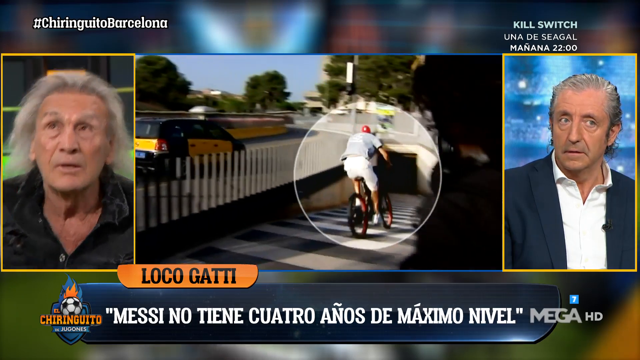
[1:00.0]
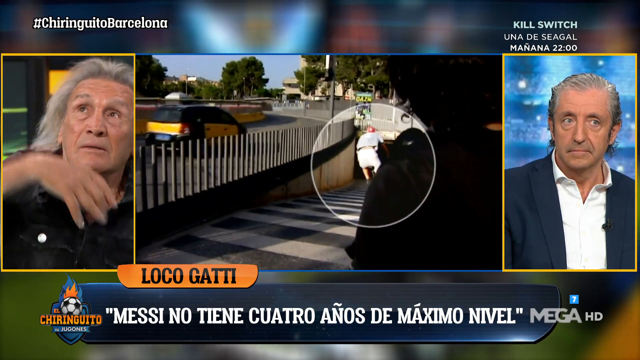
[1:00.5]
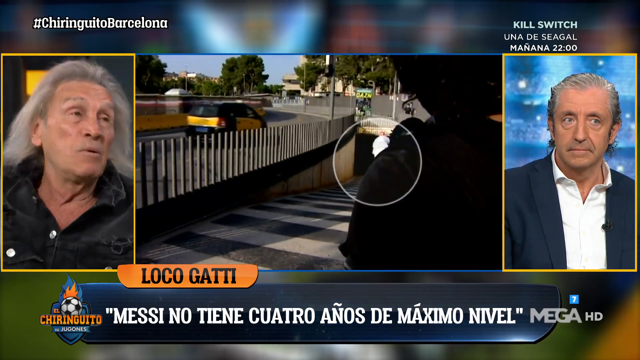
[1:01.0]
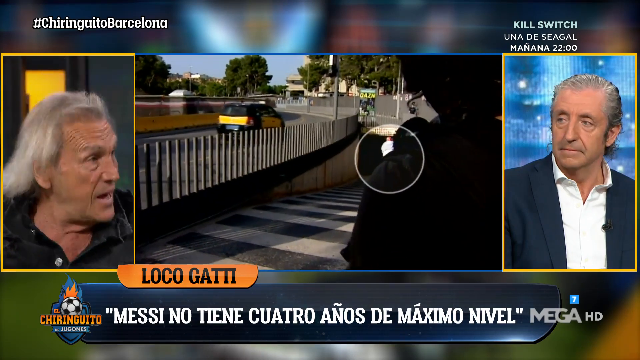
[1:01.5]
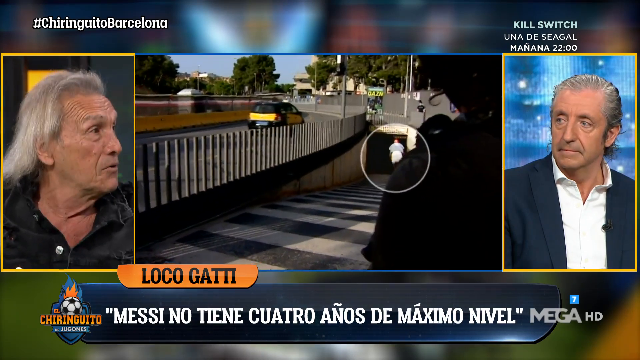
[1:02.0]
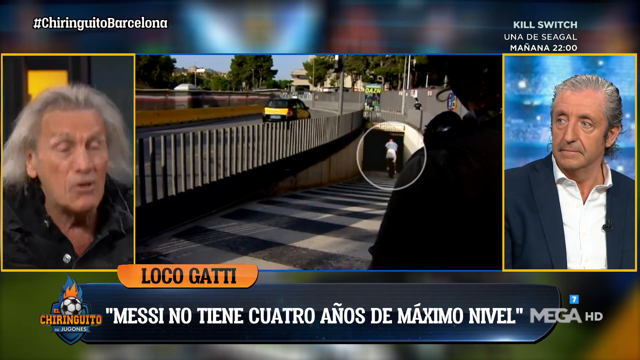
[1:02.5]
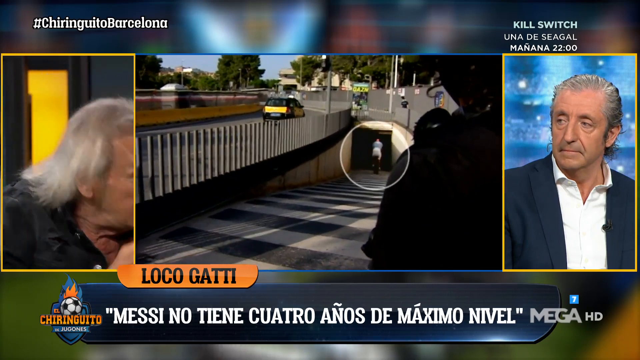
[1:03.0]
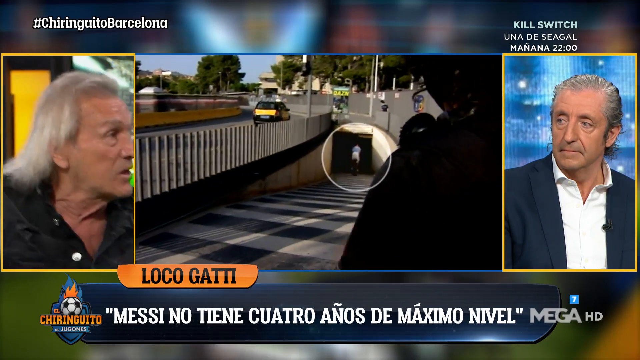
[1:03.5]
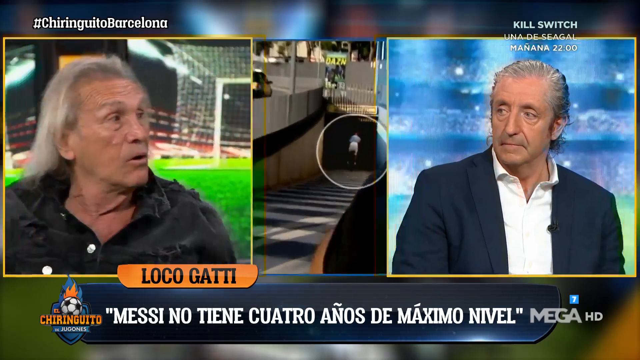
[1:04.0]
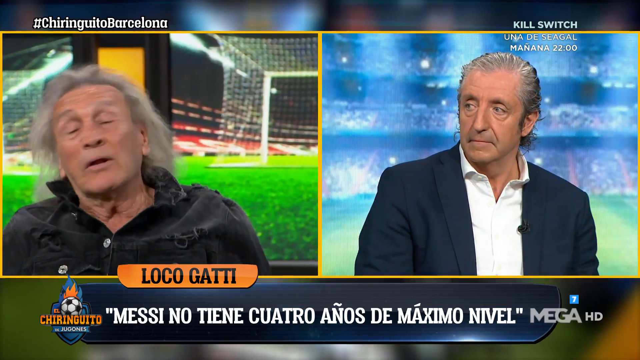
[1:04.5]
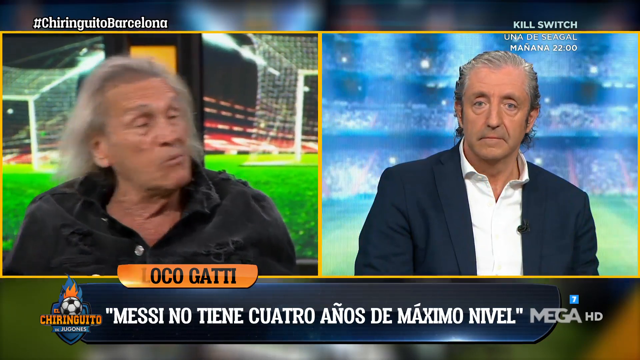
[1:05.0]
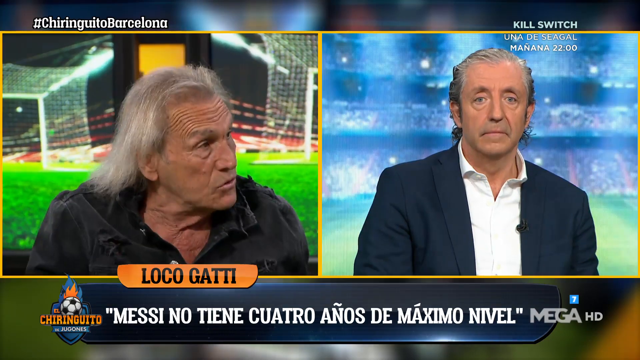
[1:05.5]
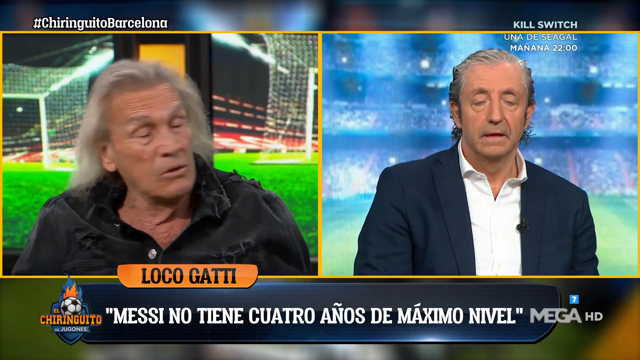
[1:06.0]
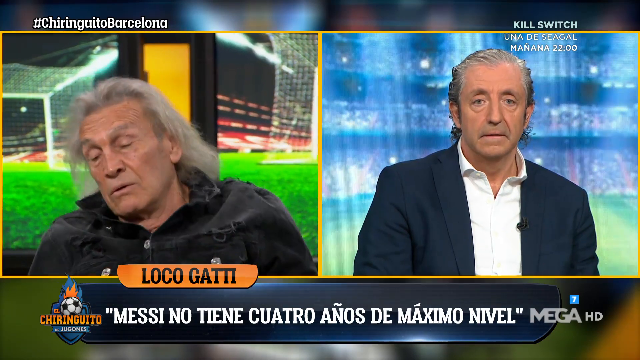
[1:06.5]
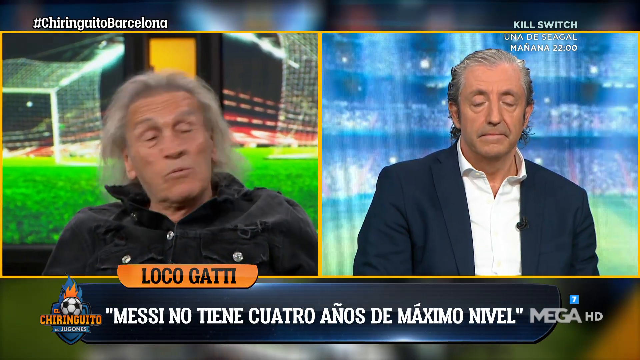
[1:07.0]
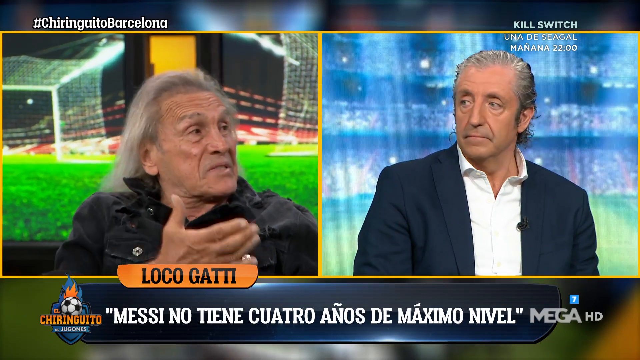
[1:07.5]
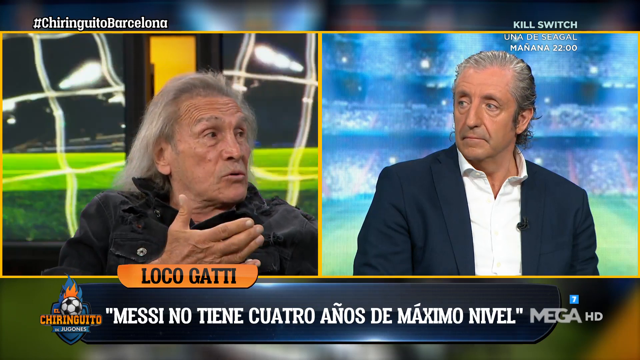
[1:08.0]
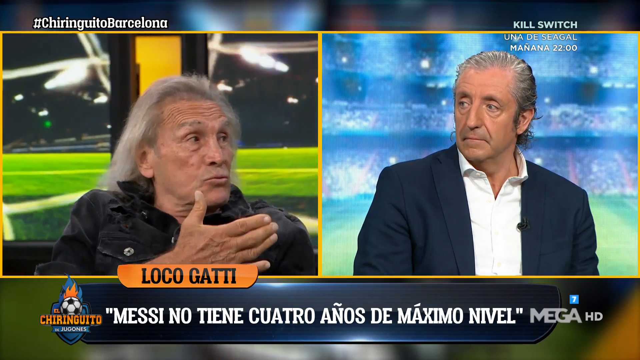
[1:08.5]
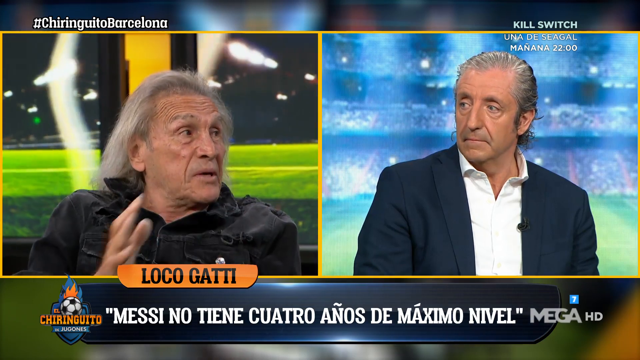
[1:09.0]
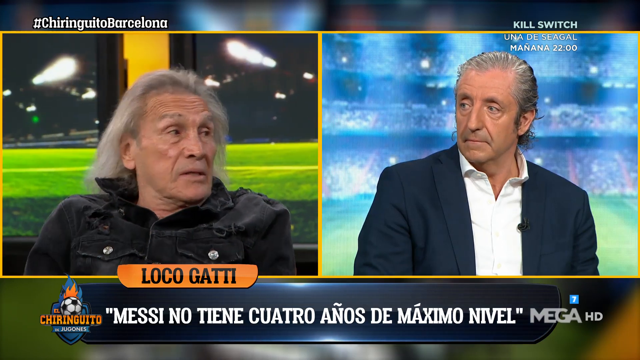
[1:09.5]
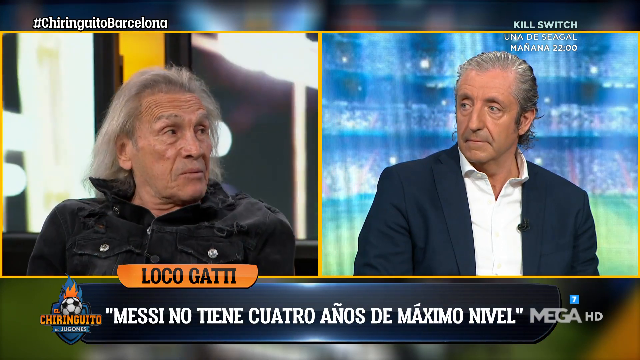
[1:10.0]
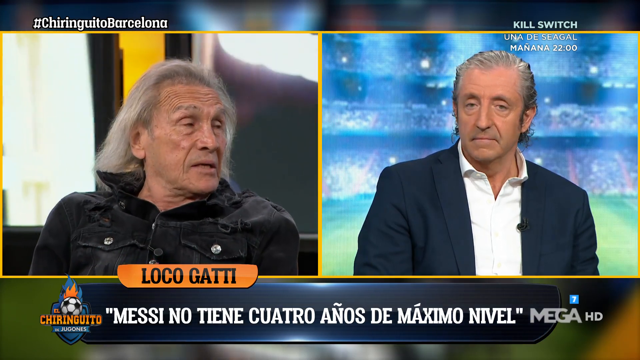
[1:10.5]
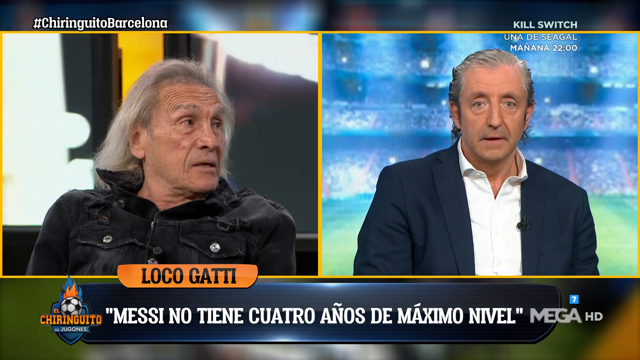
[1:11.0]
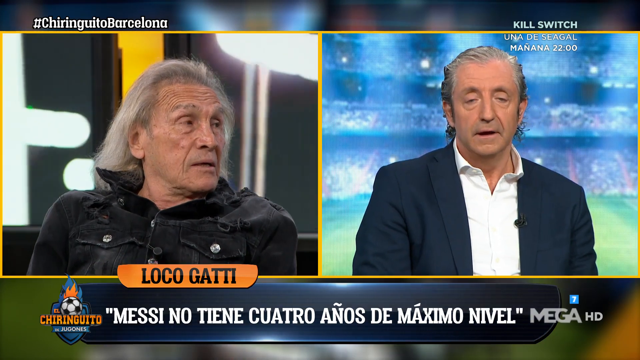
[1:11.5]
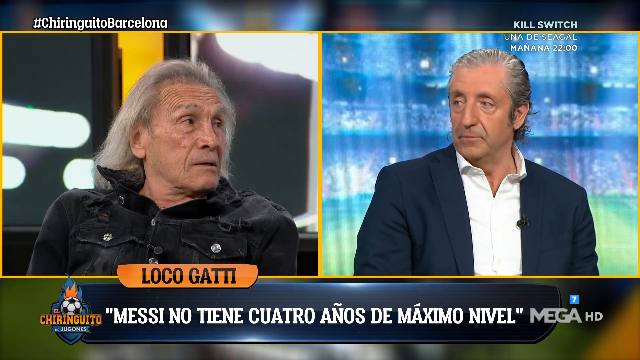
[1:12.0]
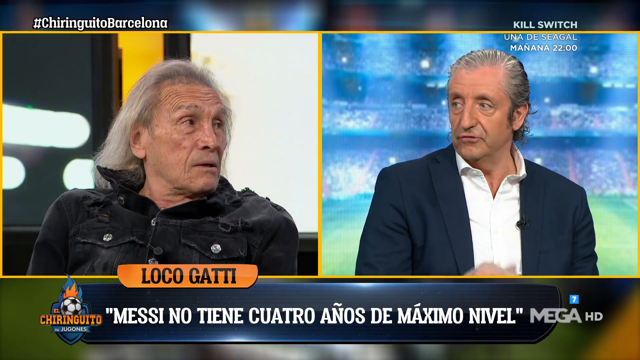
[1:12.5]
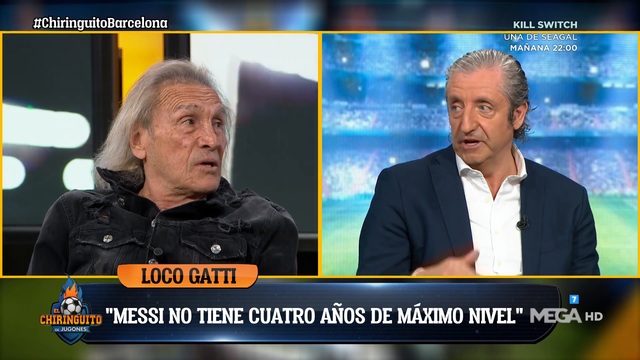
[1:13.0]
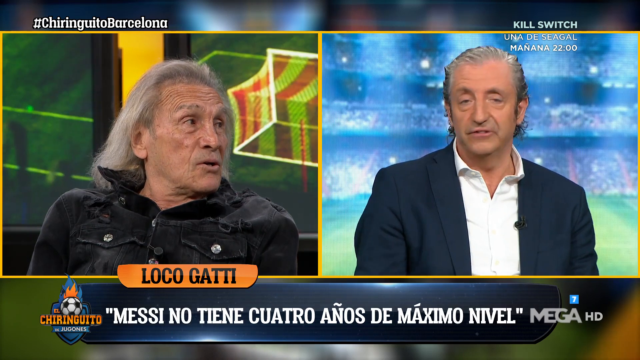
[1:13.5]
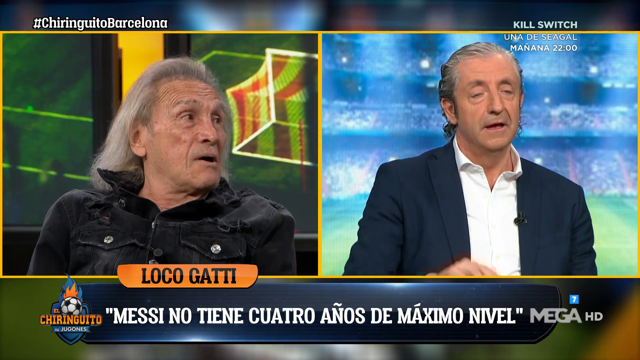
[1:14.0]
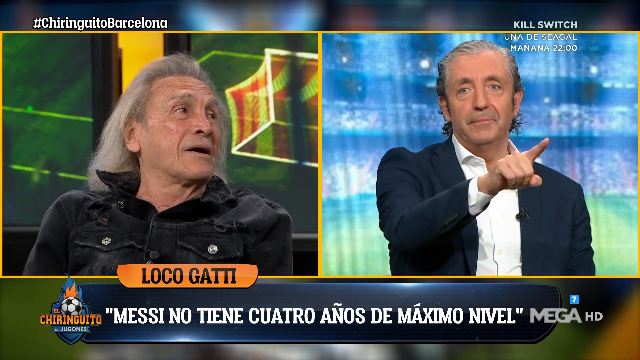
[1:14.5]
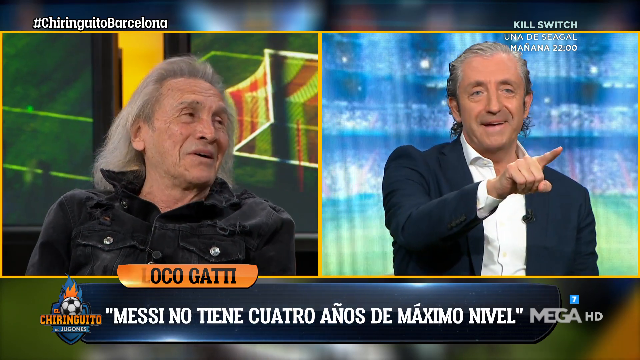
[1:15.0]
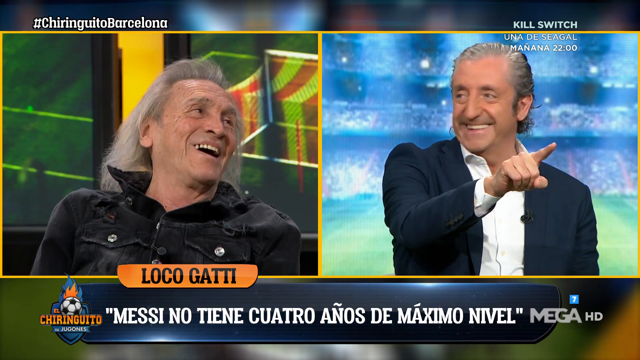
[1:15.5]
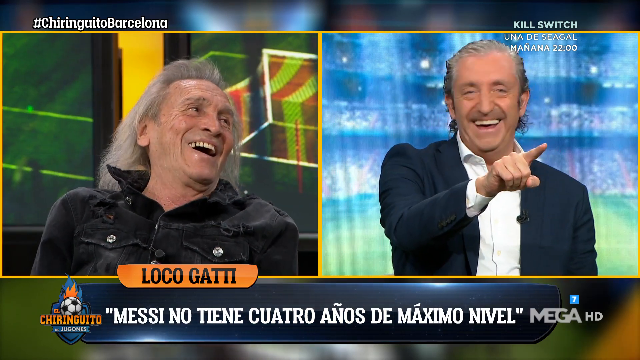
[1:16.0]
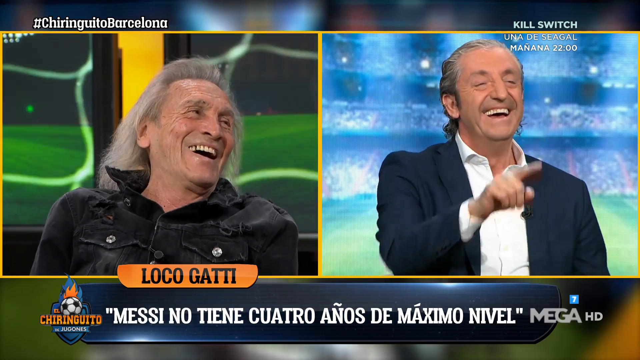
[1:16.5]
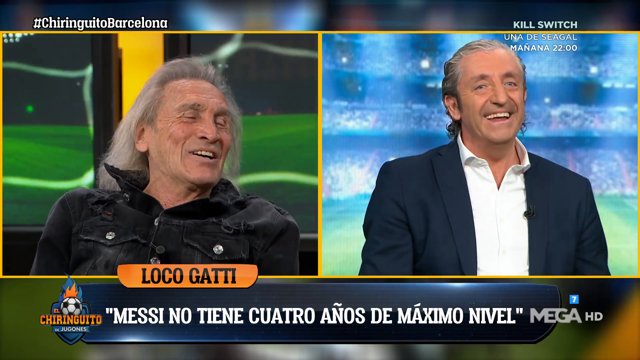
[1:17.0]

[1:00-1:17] In this news show, the center of the screen first shows a bicycle rider riding down a pedestrian ramp that leads down into a tunnel; when he reaches the entrance, he rides all the way into the tunnel. The two sides of the screen then meet in the middle, showing a man talking on the right and a man talking on the left. The man on the right points his finger out in front of him as he talks and laughs, looking out into what may be some sort of studio; he raises his hand in front of him and kind of points into the studio while talking. The man on the left looks kind of exasperated in his facial expressions and body movements; he is very animated, waving his hand in front of him, and seems to laugh at one point.